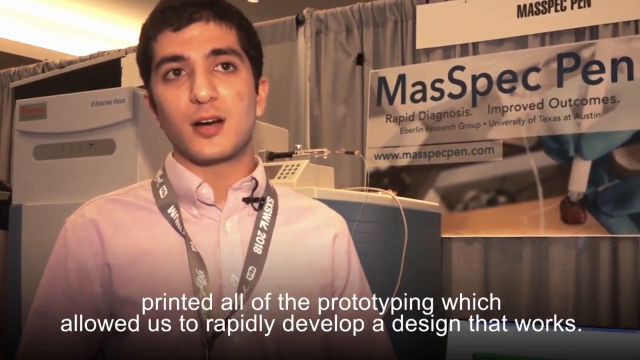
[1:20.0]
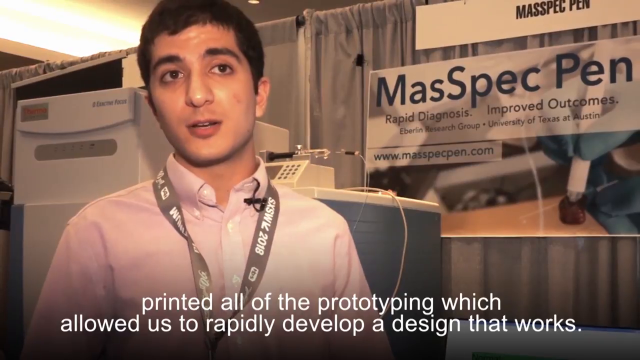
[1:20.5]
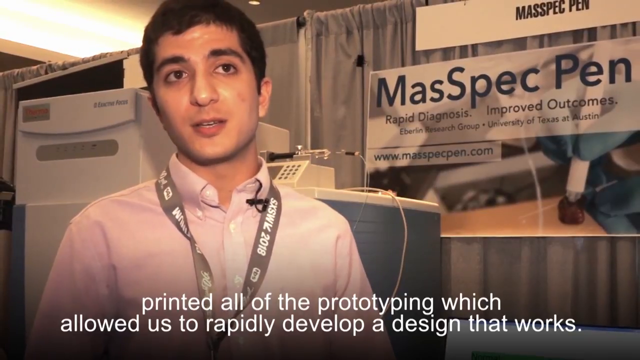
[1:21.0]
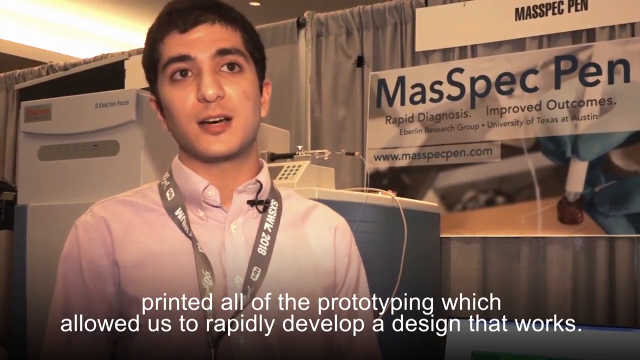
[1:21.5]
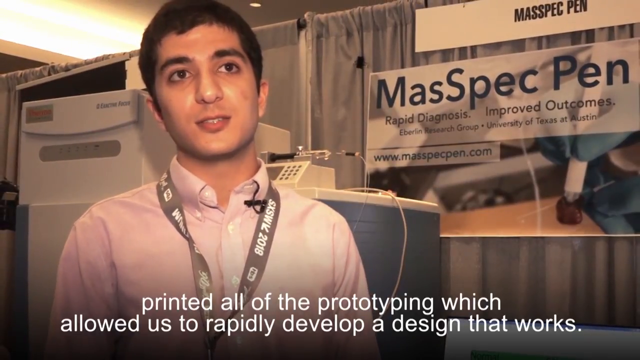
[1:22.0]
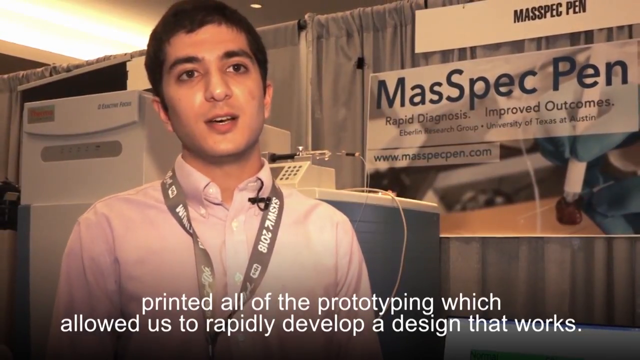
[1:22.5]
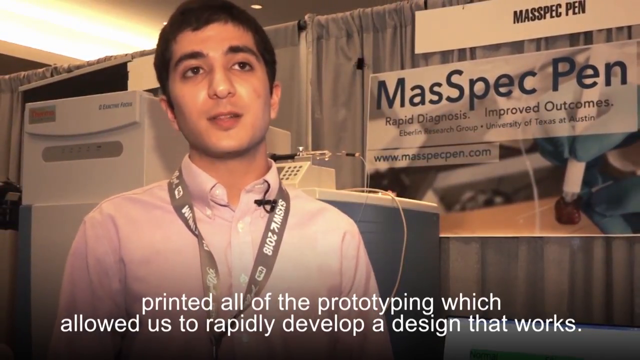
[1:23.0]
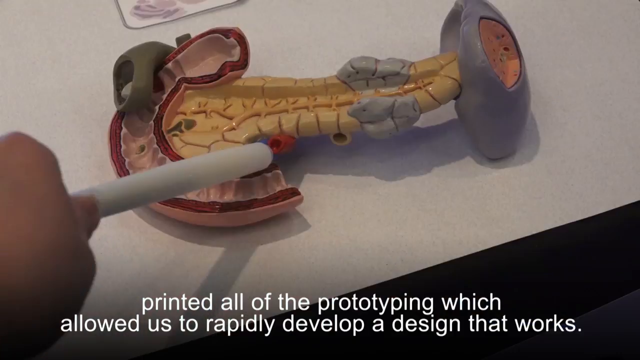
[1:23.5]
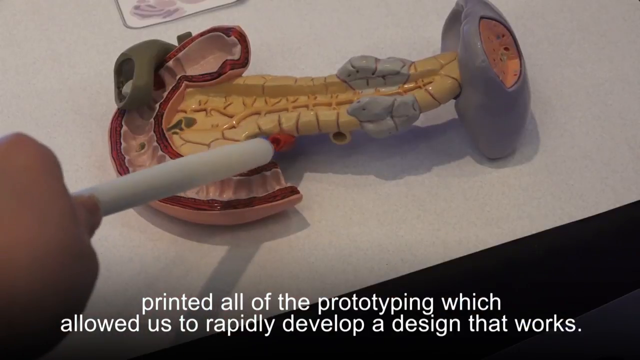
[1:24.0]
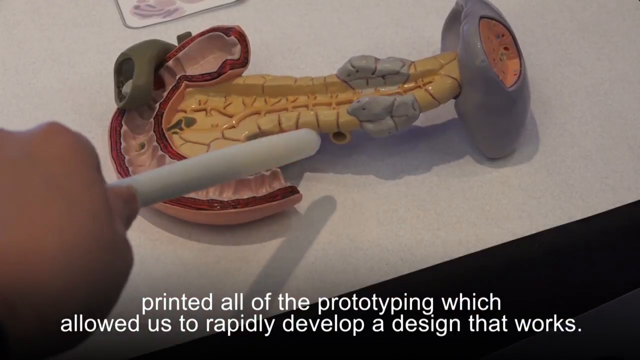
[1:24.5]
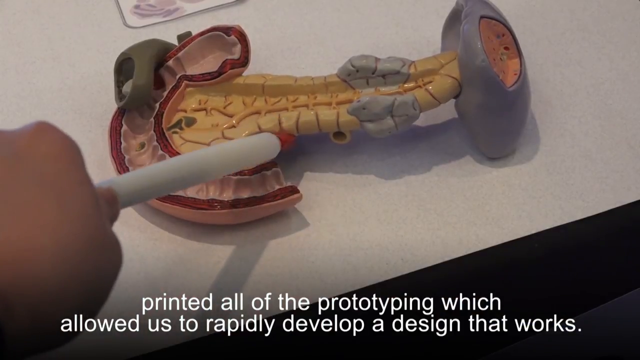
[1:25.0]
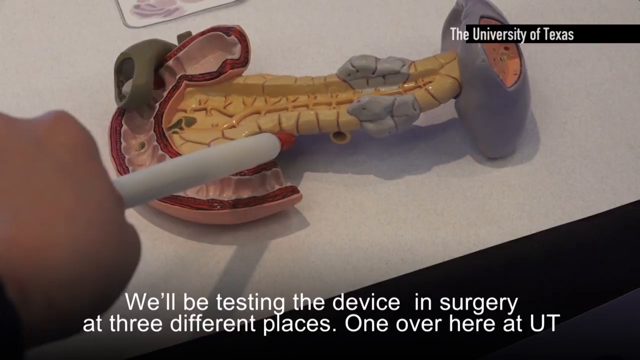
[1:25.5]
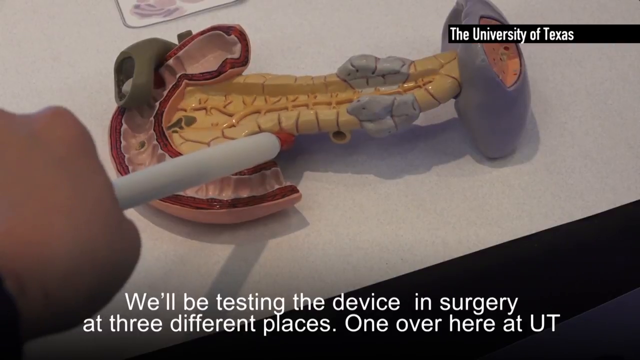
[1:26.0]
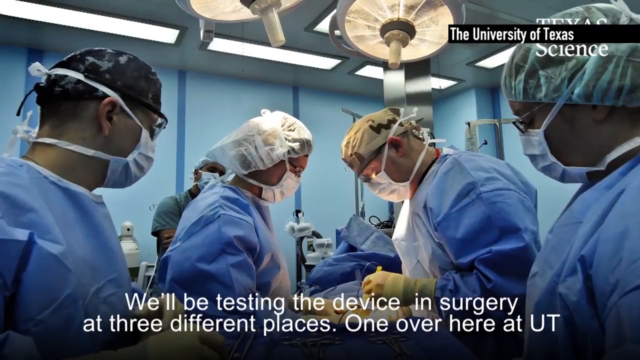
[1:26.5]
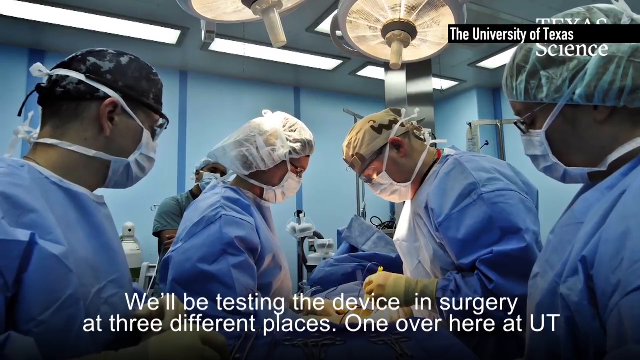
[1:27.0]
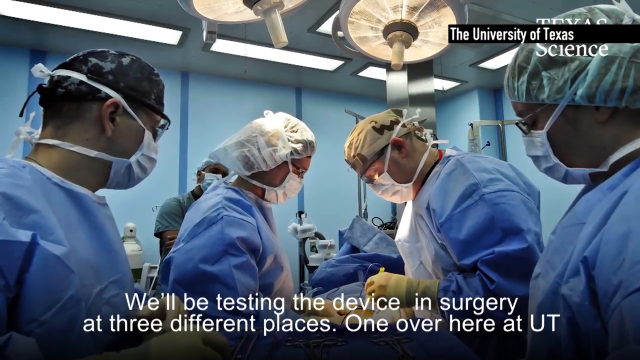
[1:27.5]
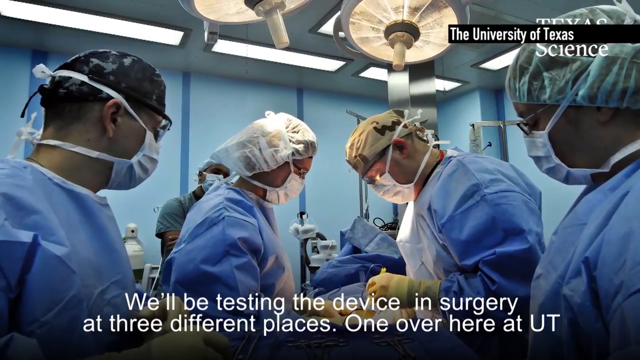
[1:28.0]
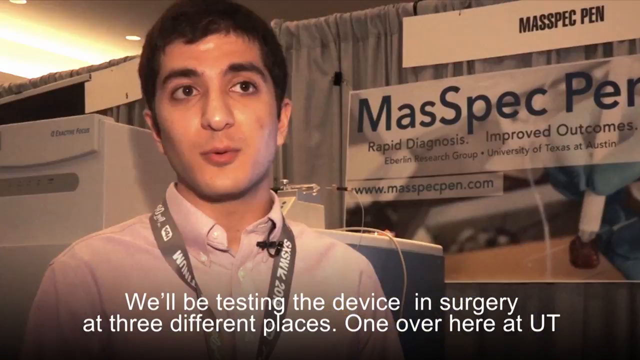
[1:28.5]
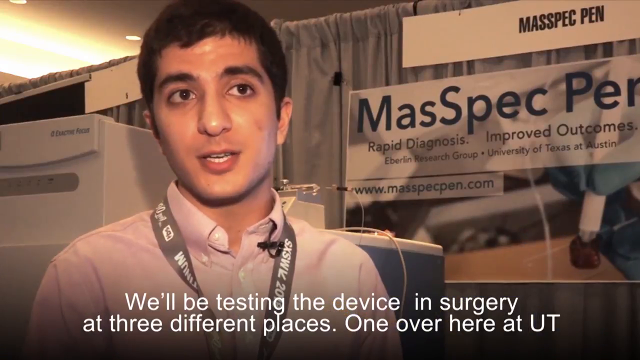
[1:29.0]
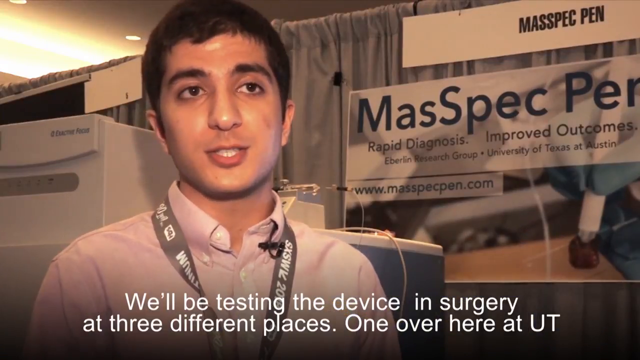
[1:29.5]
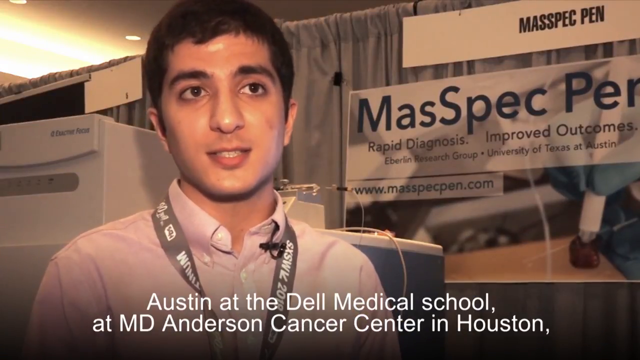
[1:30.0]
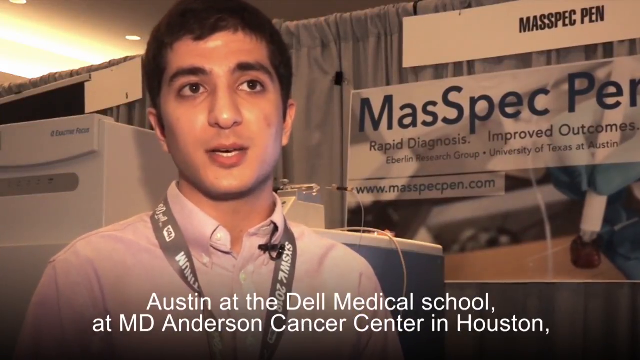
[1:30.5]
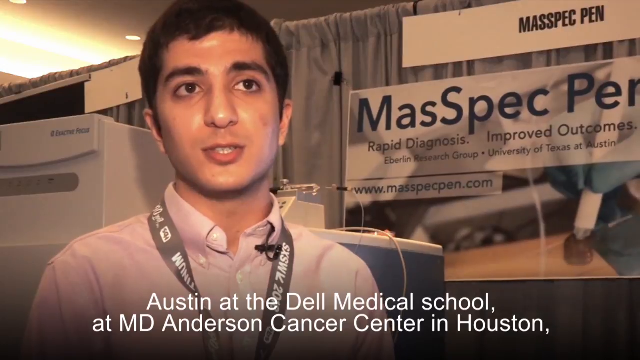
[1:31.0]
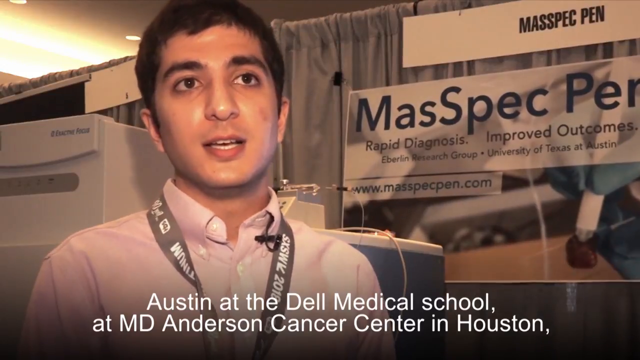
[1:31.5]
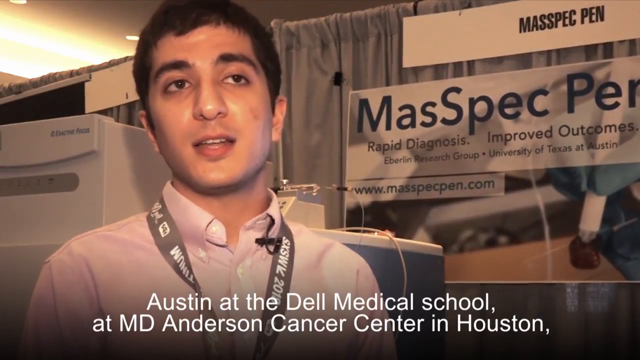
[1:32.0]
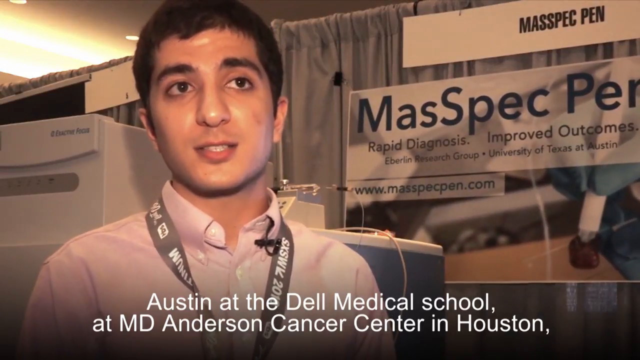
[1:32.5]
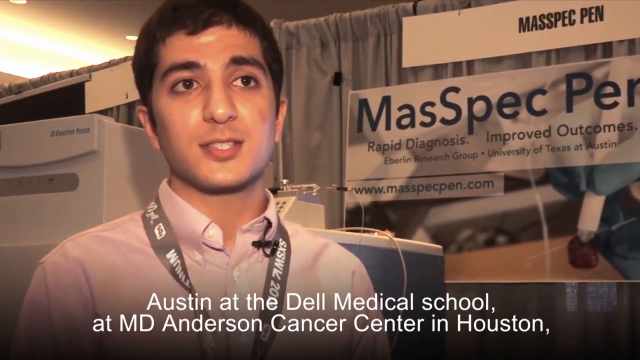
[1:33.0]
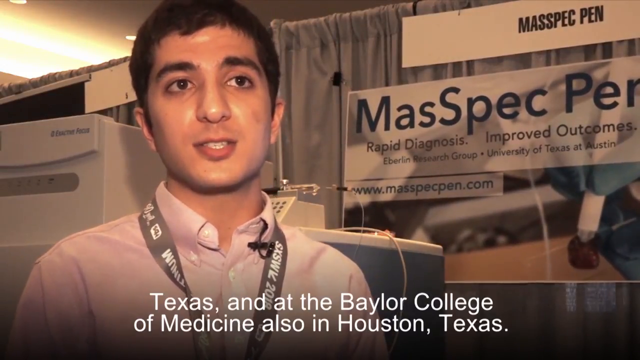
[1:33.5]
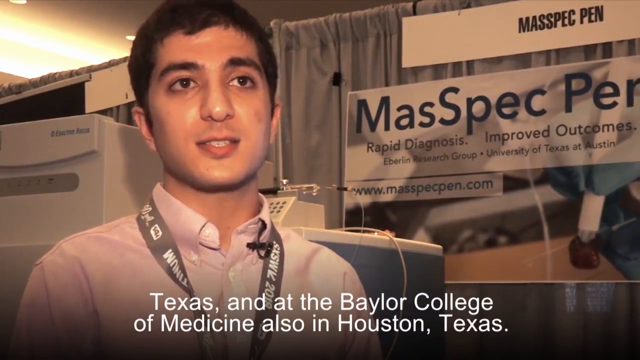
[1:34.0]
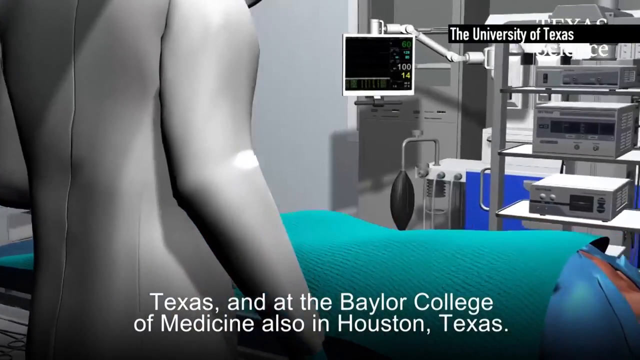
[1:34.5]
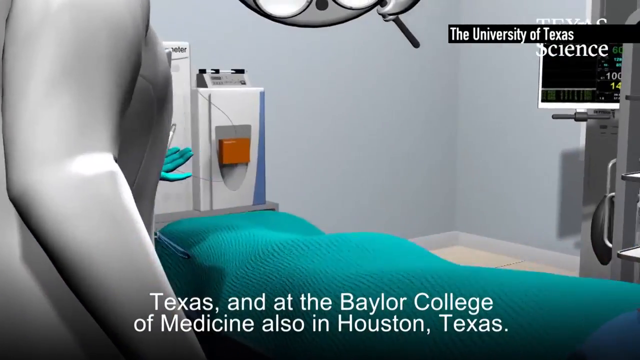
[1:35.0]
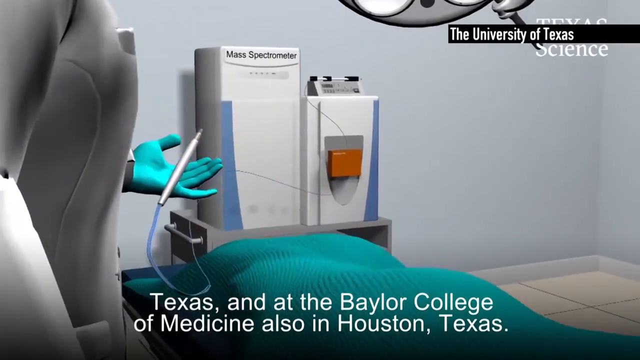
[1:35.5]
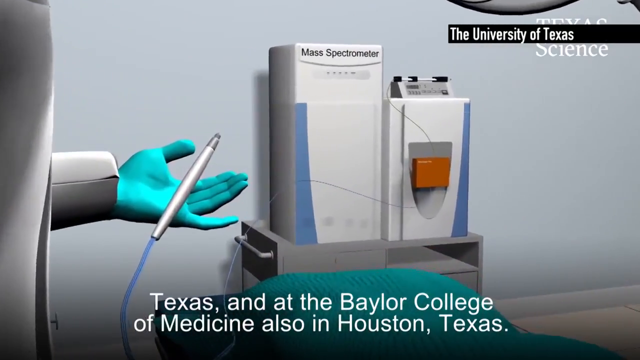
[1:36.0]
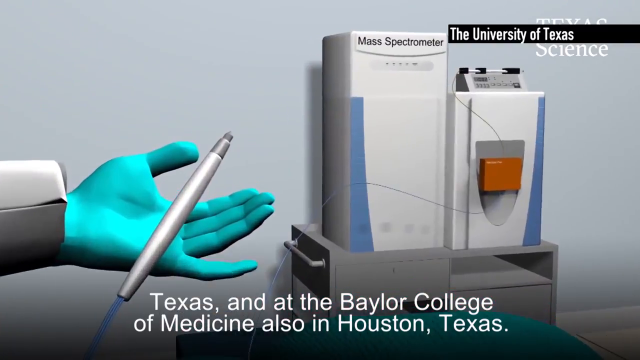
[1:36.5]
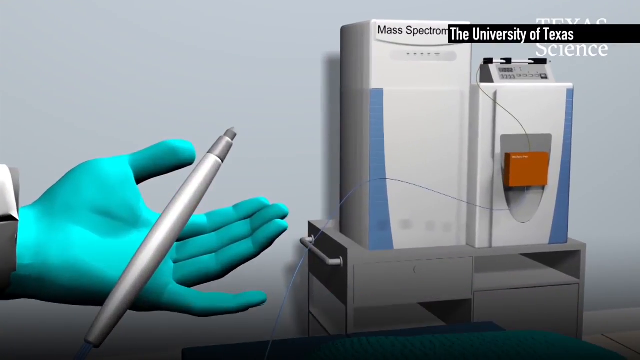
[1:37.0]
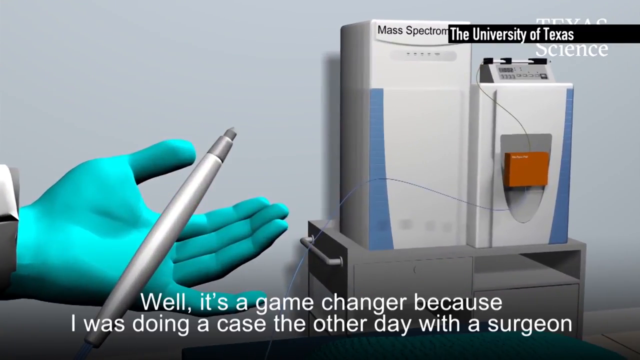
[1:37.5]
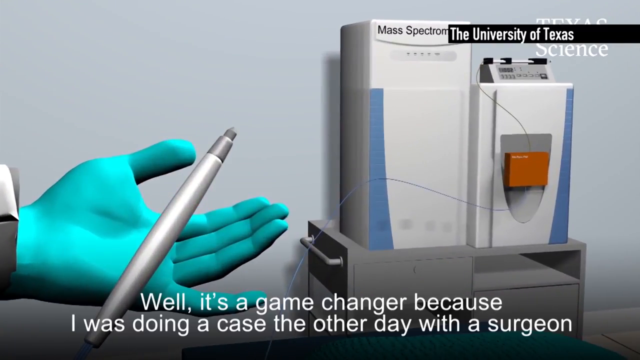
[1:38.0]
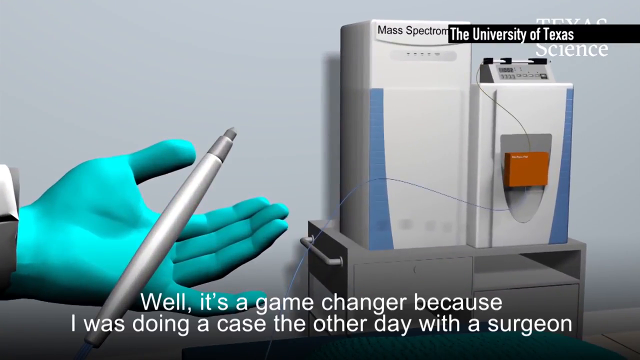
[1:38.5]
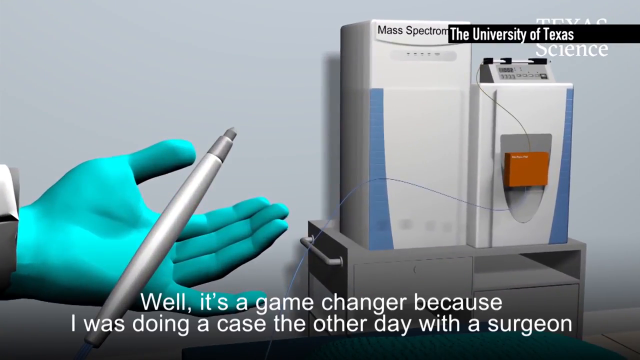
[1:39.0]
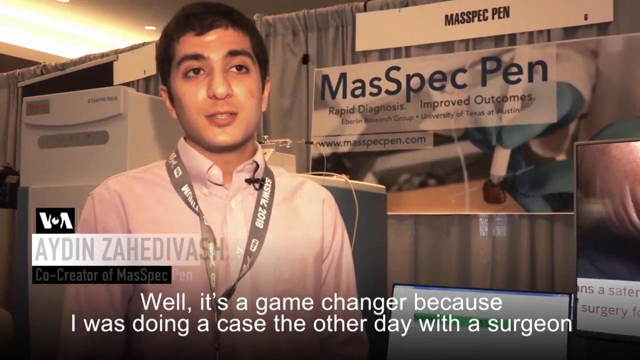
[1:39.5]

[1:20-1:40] A lighter-skinned brown man with short brown hair is on the left side, wearing a cream-colored long-sleeve shirt with a gray strap over his neck bearing white lettering and numbers. Behind him is a white and grayish box, a blue box is just over his left shoulder, and a gray curtain is directly behind him. At the top right, a white banner has black lettering reading "Mass Spec Pen." The off-white banner below reads "Mass Spec Pen" in blue letters, with black text below reading "Rapid Diagnosis Improved Outcomes" and, below that, "Eberlin Research Group, University of Texas at Austin." Slightly to the left, in its own off-white square, blue lettering reads "www.massspecpen.com." The white text below says "the start of an idea, of the idea, and now it's been about two and a half years, and since then we've had 3D printed all of the prototyping which allowed us to rapidly develop a design that works." Next, a light brown hand on the left side holds the white pen over a white table. The model has a rounded gray head and a yellow, spaced-out spine that kind of has gray at the top portion, with a red-outlined pink rounded piece at the bottom. A black box appears at the top right reading "the University of Texas" in white text. In another image, the white text below says "we'll be testing the device in surgery at three different places. One over here at UT." A surgery room with blue walls is shown, with rounded white lights with white tubing sticking out of them. Four people in the picture wear blue scrubs, each with a different hat, and all wear white masks. A fifth person on the far left wears green scrubs. White lighting is visible at the top, with gray-framed white lights coming down. The screen changes, and the white lettering at the bottom says "Austin at the Dell Medical School at MD Anderson Cancer Center in Houston." The view returns to the young brown-skinned man with short brown hair and a cream-colored shirt, with a gray badge strap with white lettering around his neck. The white and grayish box is on the left, the blue box just over his left shoulder, and the gray curtain at the top. The white banner at the top right says "Mass Spec Pen" in black lettering, the off-white banner below says "Mass Spec Pen" in blue lettering, black text below reads "Rapid Diagnosis Improved Outcomes," and below that "Eberlin Research Group, University of Texas at Austin." To the lower left, blue text on an off-white background says "www.massspecpen.com," as the young man talks with the camera crew. The white lettering below changes to "Texas and at the Baylor College of Medicine, also in Houston, Texas." A black banner at the top right has white lettering saying "the University of Texas." A digital screen shows a person on the left in a gray suit and someone laying in a bed with a green sheet over them, with gray walls. The mass spectrometer box, cream colored, is on the left side, sitting on a gray shelf, and the other off-white grayish box is to its right, with a small orange box at the center. The person in the gray suit wears a teal-colored glove on their left hand and holds the rounded pen, which has a blue corded stem attached to its bottom. The white lettering at the bottom changes to "well, it's a game-changer because I was doing a case the other day with a surgeon."